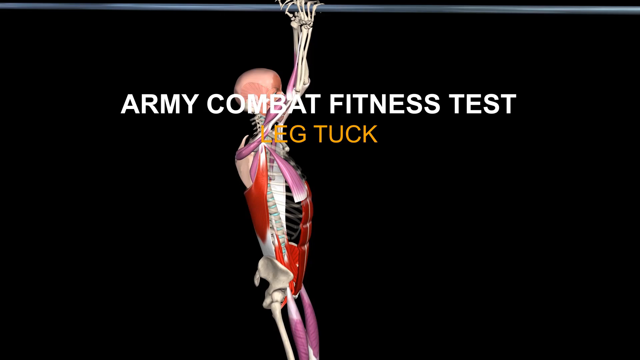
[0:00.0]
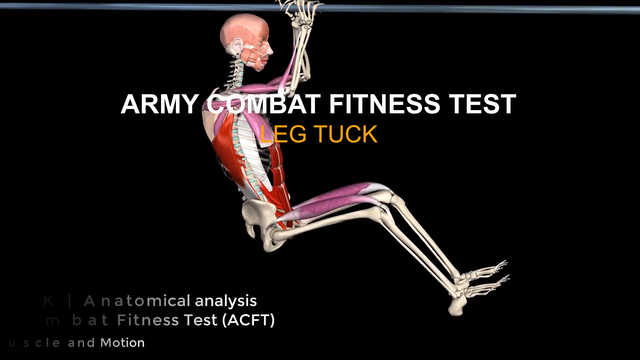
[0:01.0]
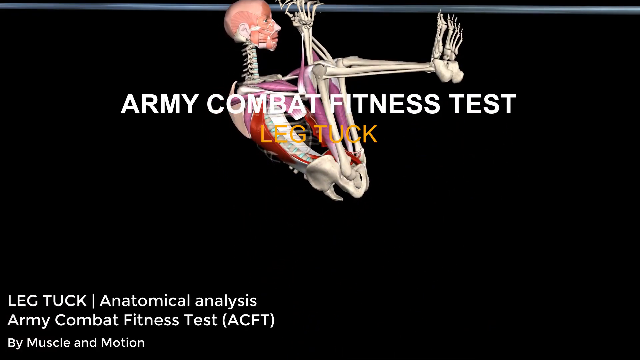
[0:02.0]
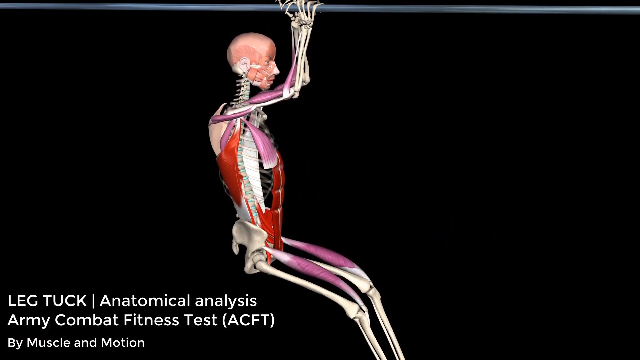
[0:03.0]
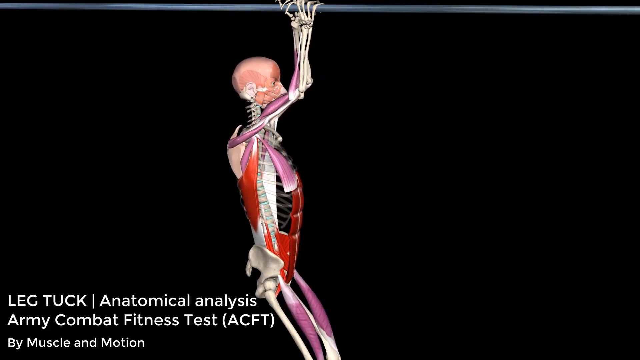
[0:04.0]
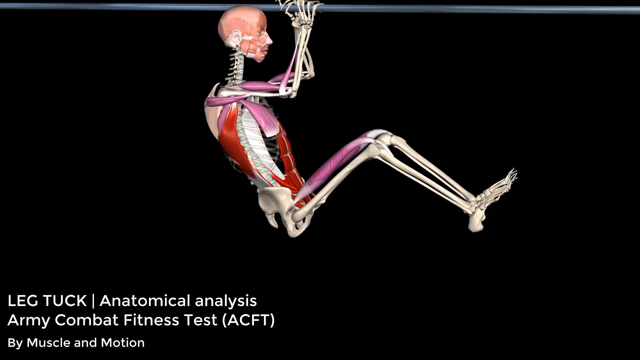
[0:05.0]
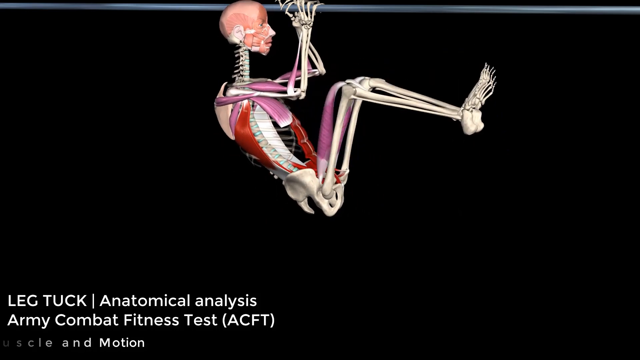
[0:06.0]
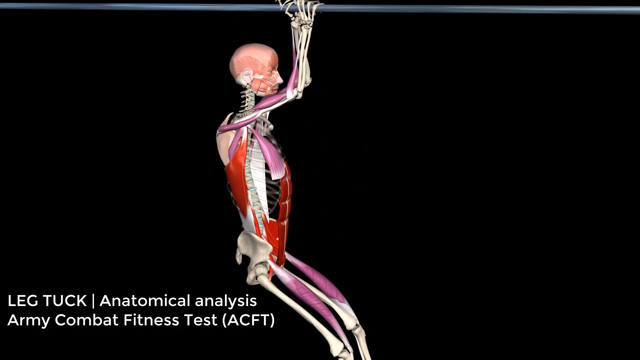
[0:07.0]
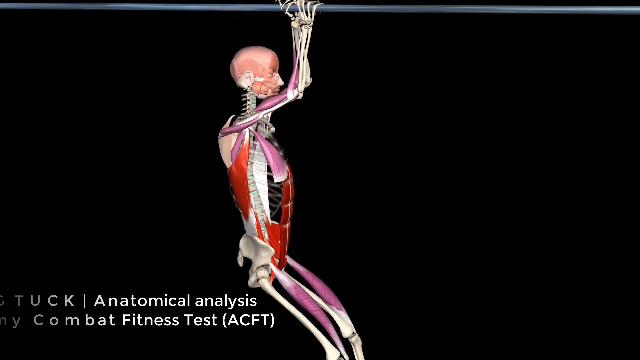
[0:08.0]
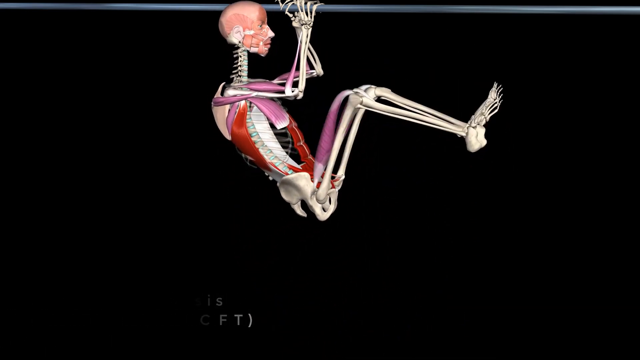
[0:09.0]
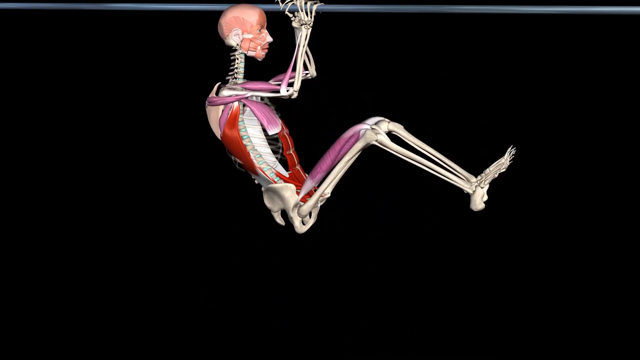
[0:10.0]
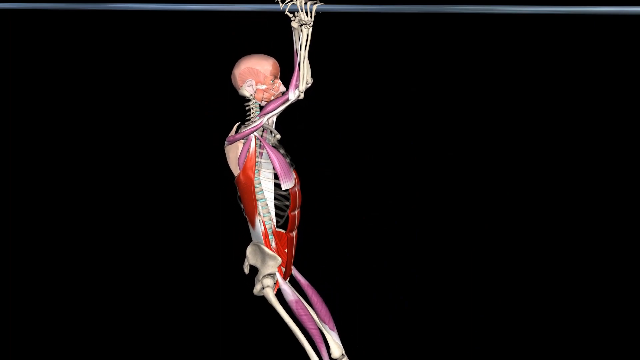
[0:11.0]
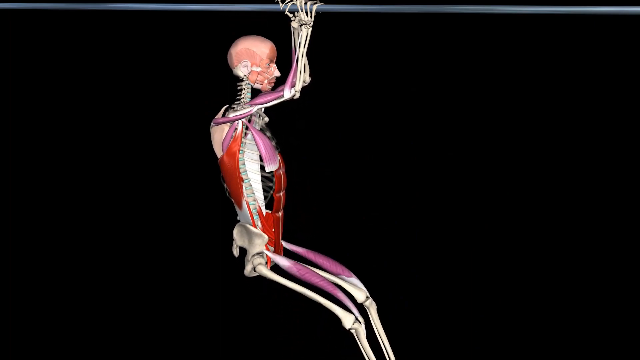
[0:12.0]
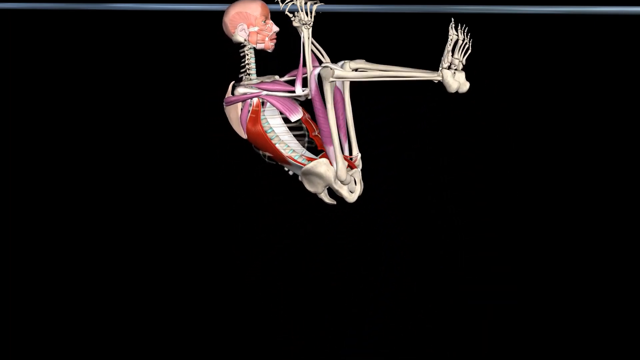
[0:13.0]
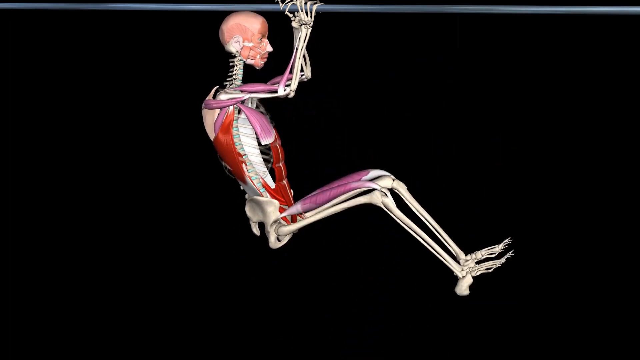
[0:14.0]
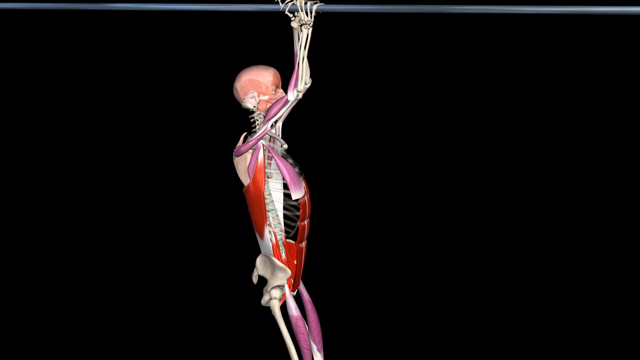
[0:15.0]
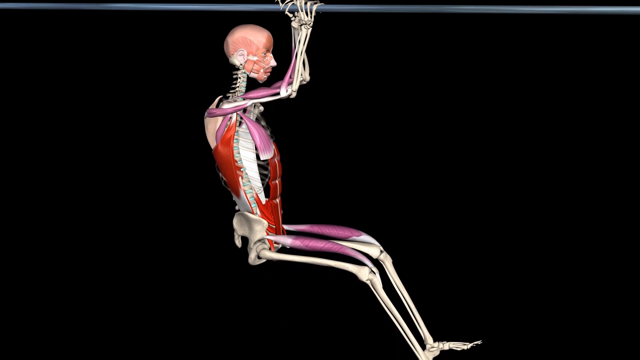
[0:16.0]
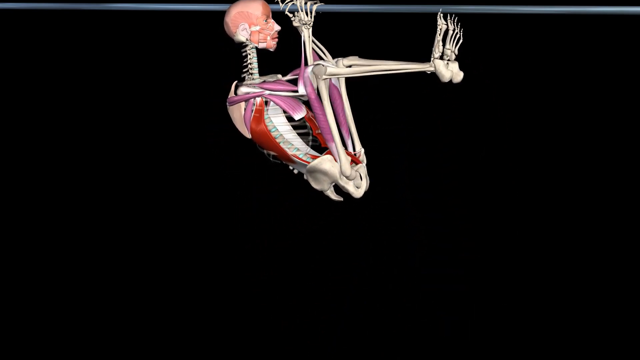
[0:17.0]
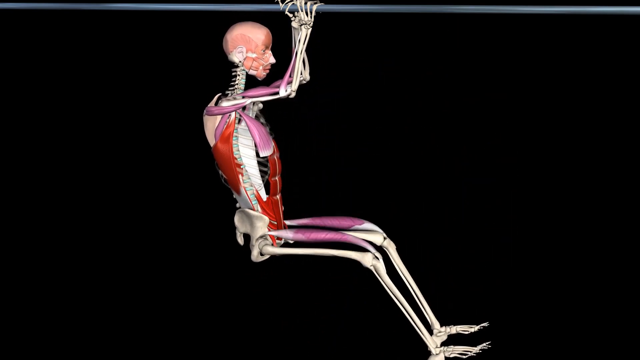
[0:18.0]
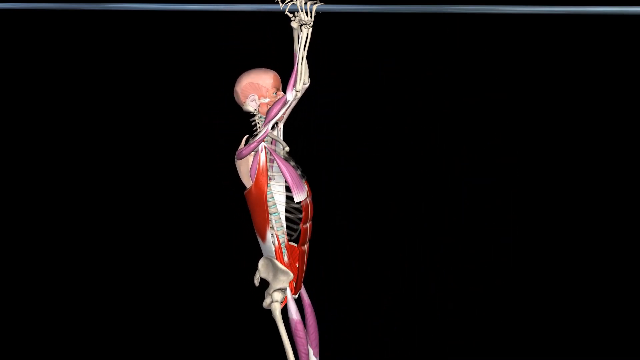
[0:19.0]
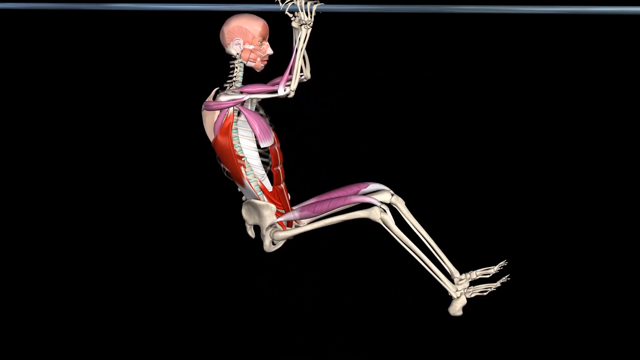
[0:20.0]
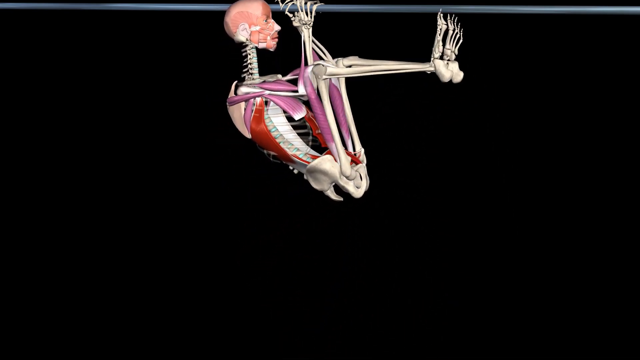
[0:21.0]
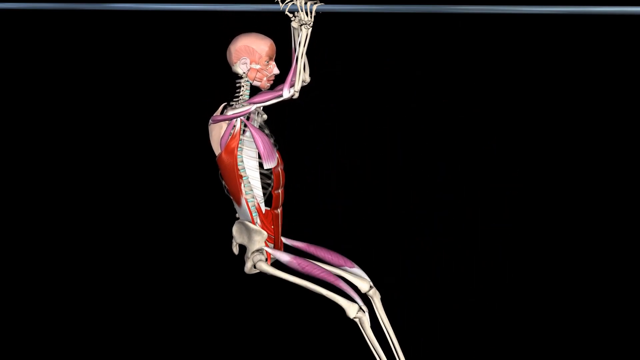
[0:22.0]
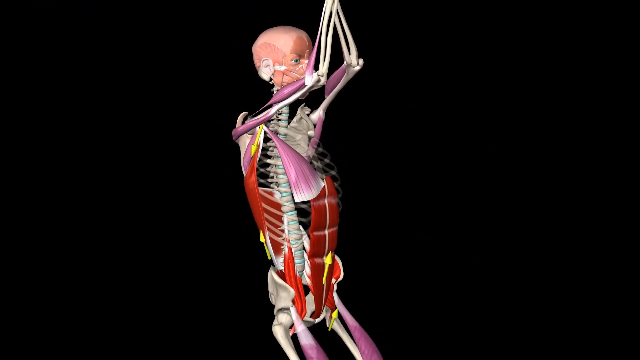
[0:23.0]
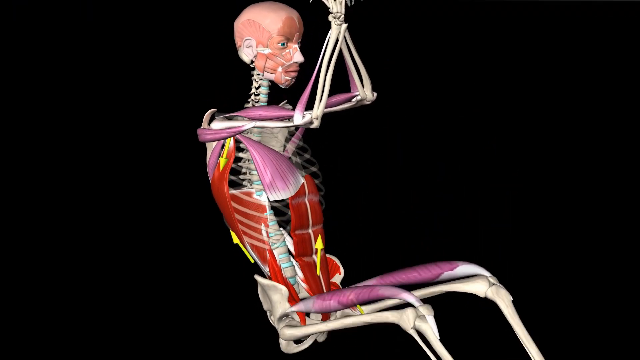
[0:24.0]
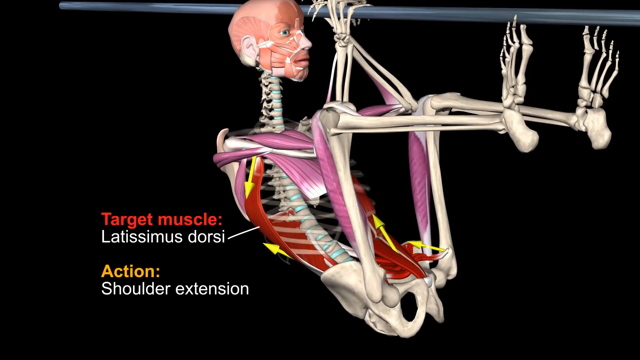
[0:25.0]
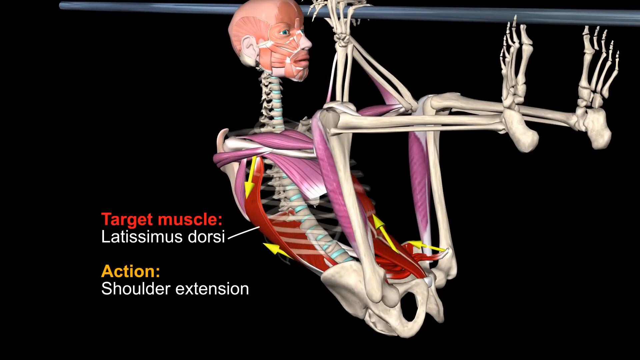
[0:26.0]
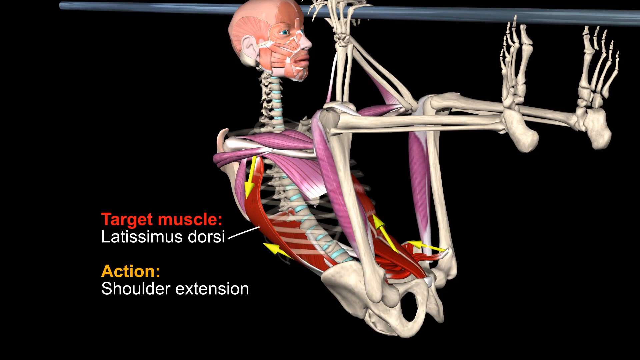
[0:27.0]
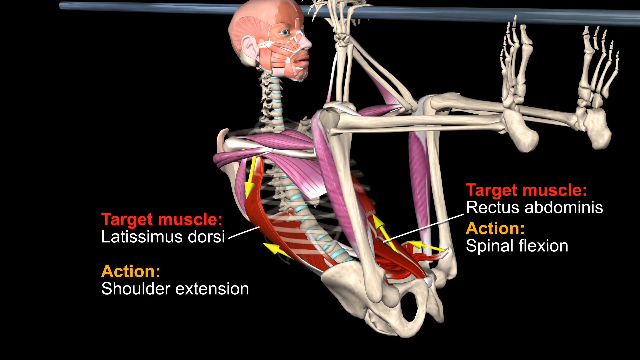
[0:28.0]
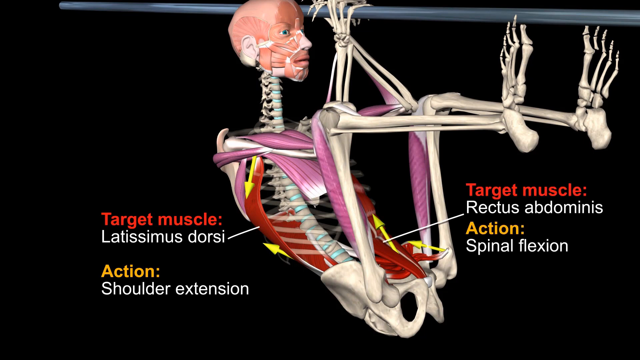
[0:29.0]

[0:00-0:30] The video opens with white text on the screen reading "army combat fitness test," with orange text underneath reading "leg tuck," all in capital letters. There is a computer-generated 3D image of a skeleton holding on to a bar, seen in profile and facing right, with a silver bar at the top and a black background. The skeleton pulls itself up, pulling its knees up while holding on to the pole. In the bottom left corner, text appears with more information about the video. The skeleton does the pull-up over and over as a repeated 3D animation: holding the bar, it pulls itself up by bending its elbows and bends its knees as it rises. Most of the skeleton's white bones are visible, along with some muscles depicted in pink and red, and parts of the face, including the eyes, are also depicted. A different shot then shows the pull-up from what is kind of a more front-facing view, showing more of the skeleton's face and features, and text appears on the screen pointing to different parts of the skeleton's anatomy.